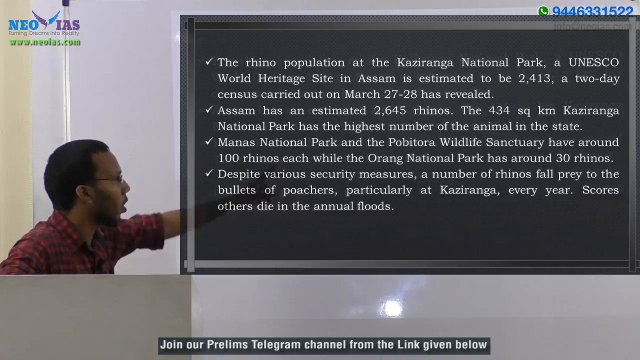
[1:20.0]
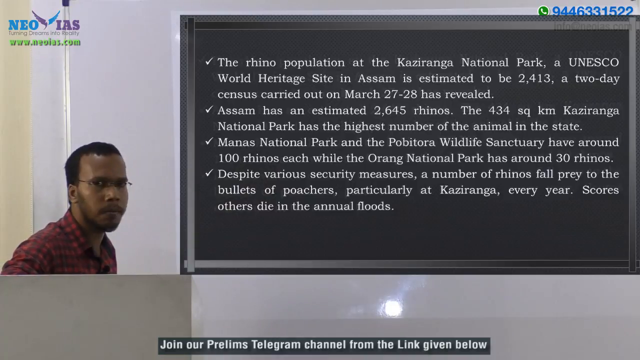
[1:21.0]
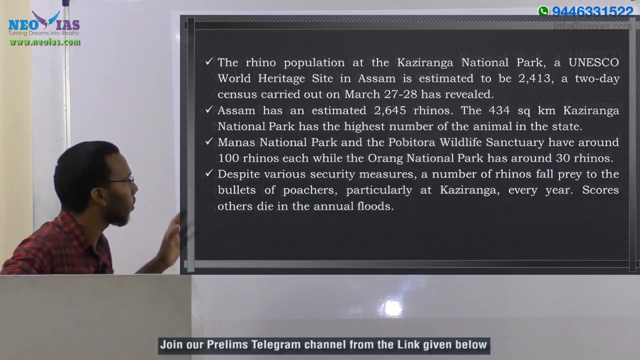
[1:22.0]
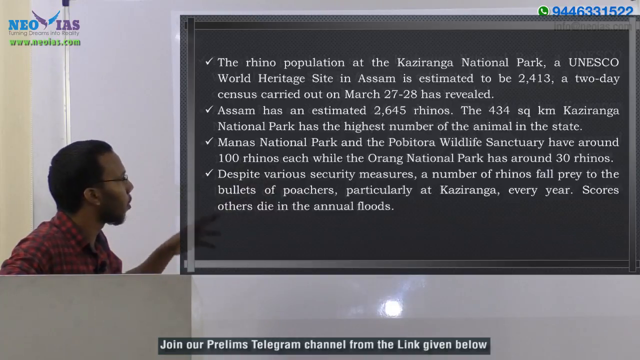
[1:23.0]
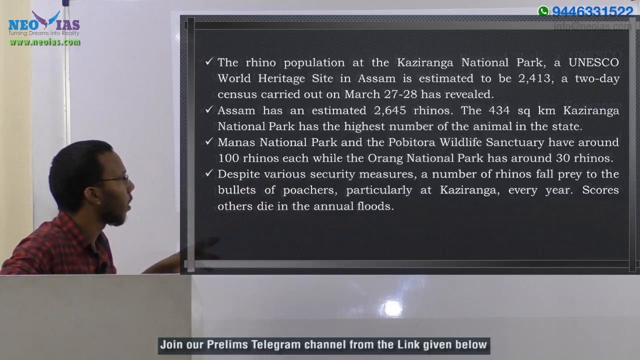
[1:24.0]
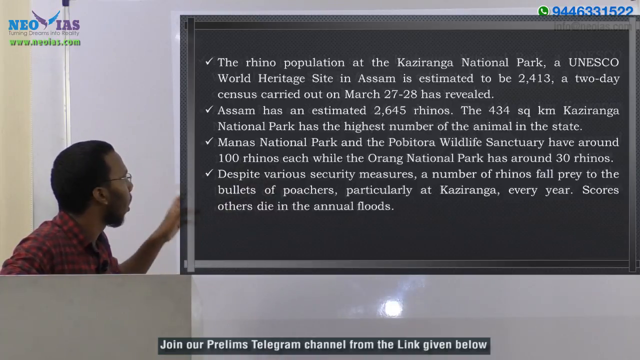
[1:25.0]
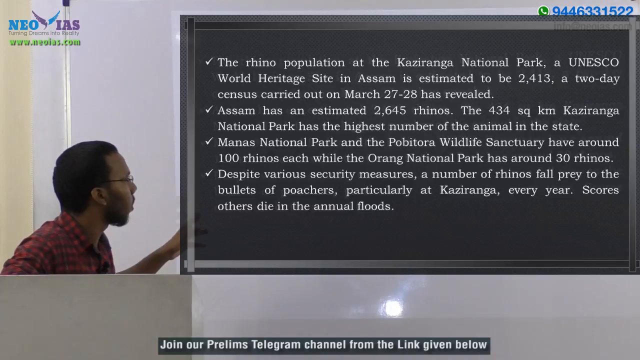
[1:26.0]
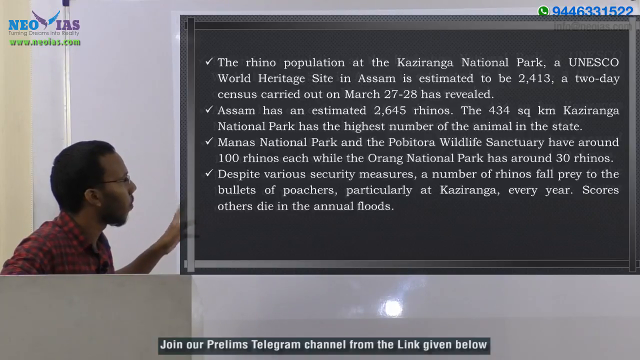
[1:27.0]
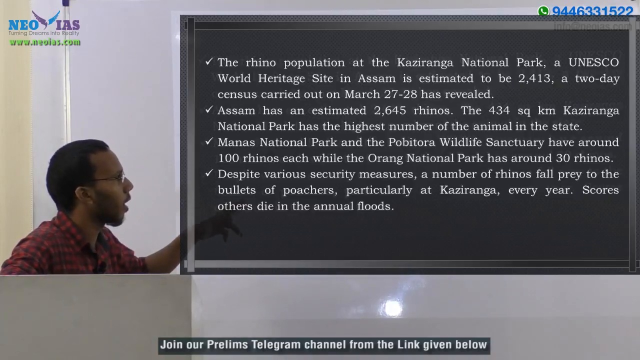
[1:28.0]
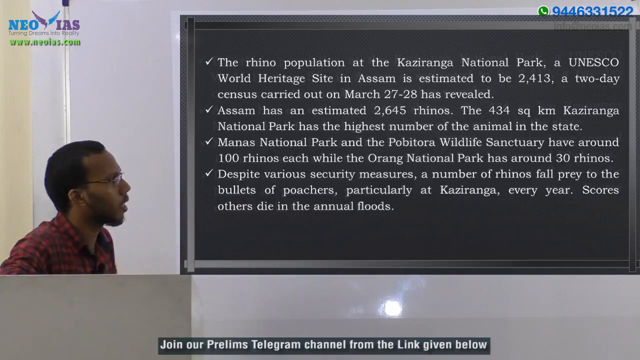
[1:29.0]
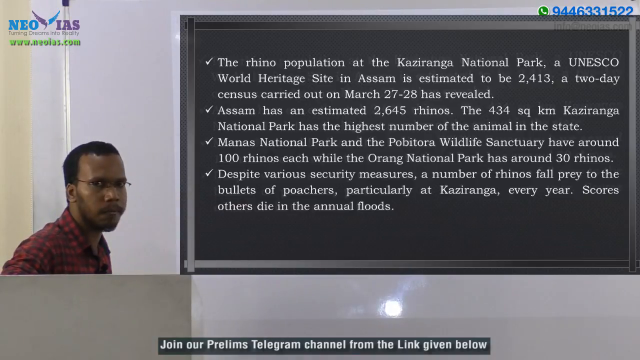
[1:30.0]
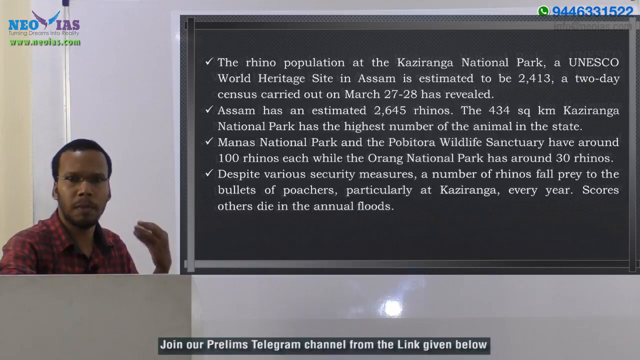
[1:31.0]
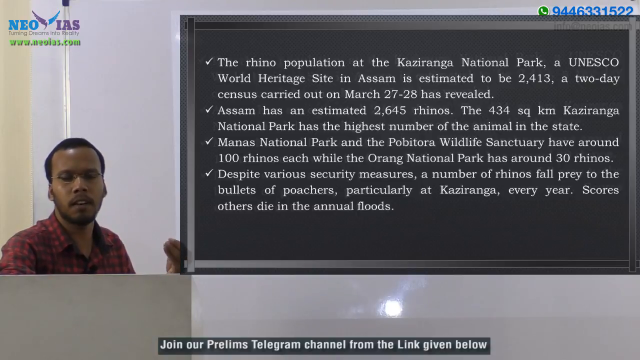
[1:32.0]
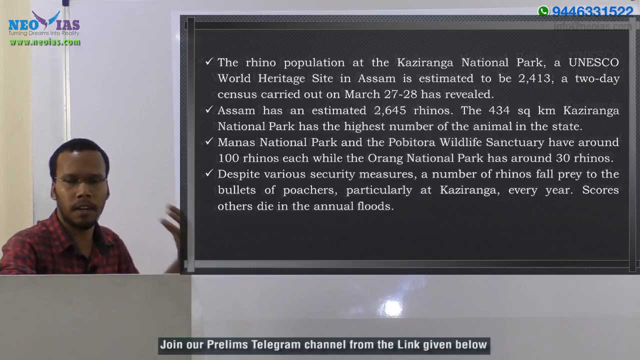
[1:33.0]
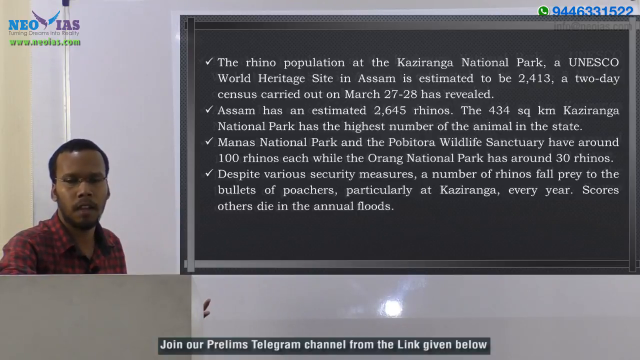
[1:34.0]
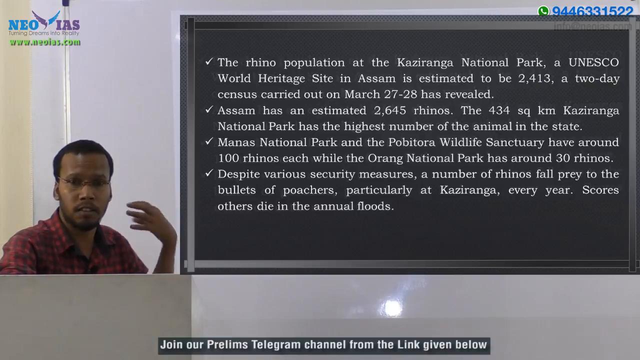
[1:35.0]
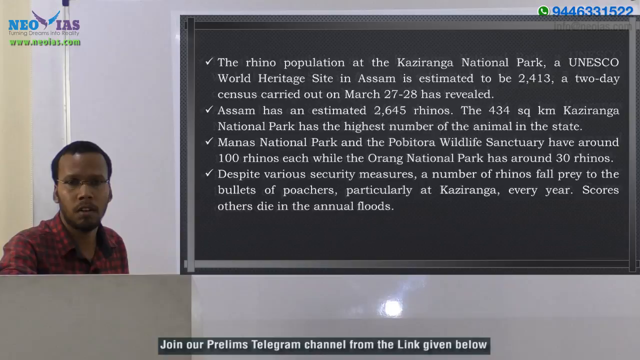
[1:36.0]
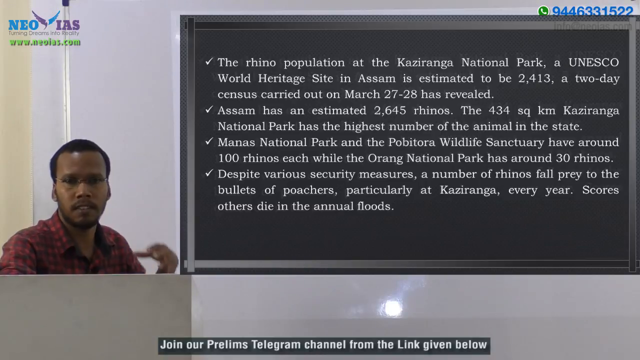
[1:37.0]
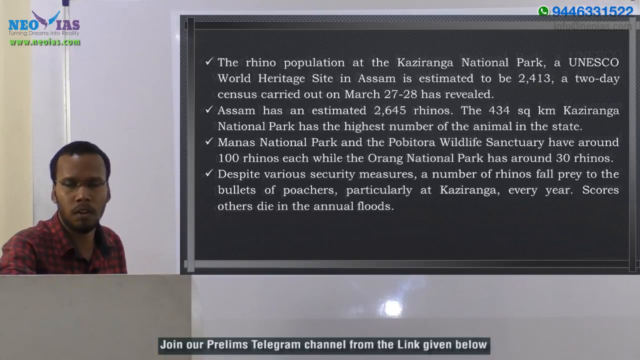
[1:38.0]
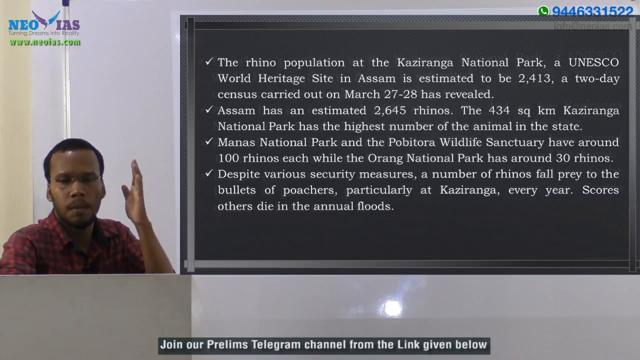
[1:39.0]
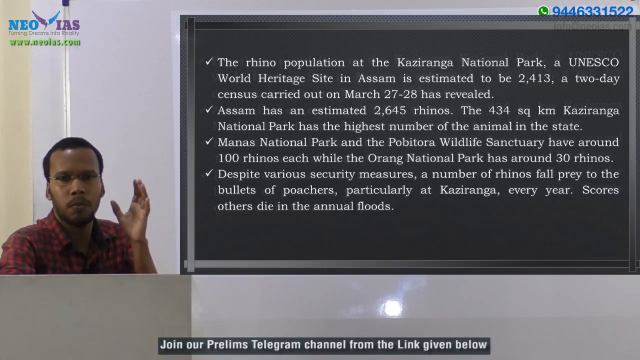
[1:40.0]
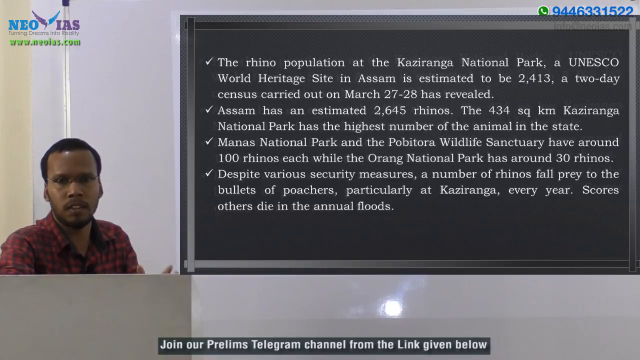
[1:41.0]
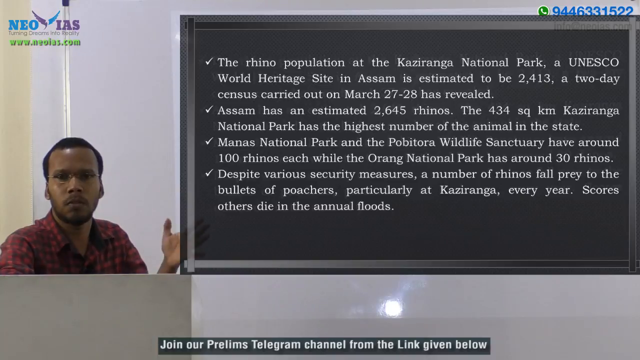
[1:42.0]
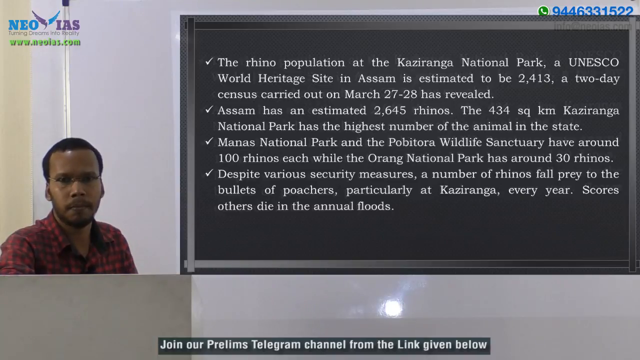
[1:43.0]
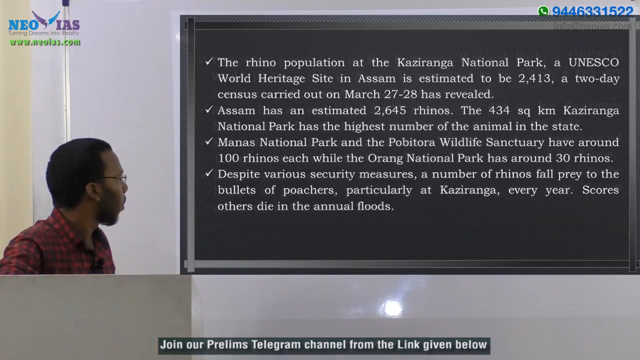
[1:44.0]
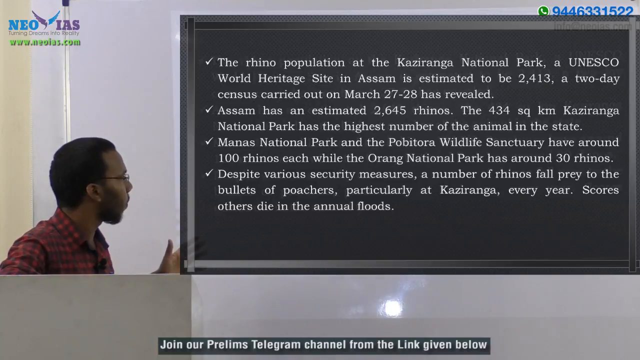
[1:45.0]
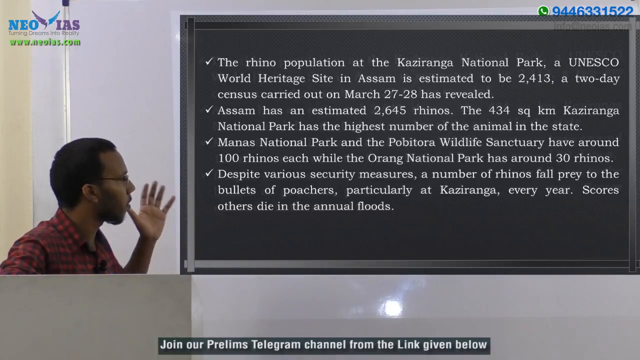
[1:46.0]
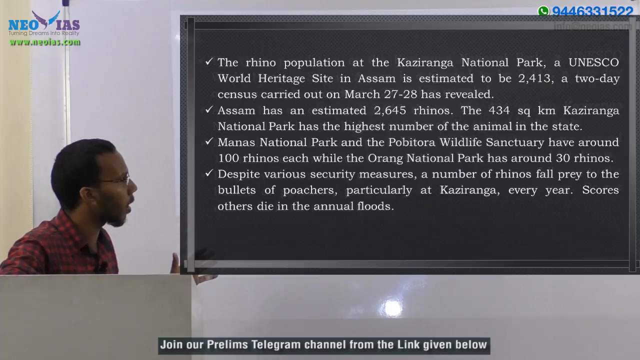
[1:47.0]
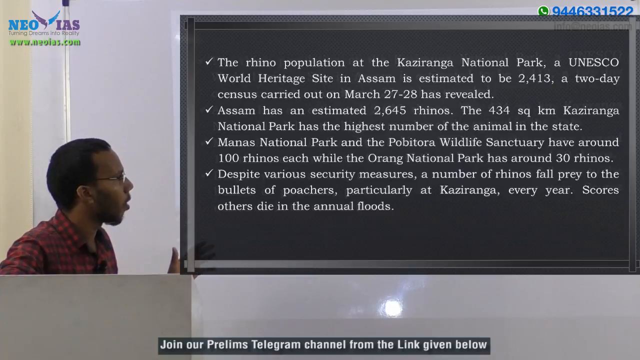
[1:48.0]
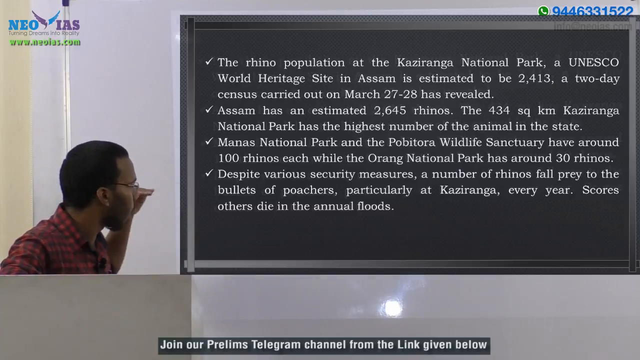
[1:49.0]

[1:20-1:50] A man talks directly to the camera while explaining something on a board on the wall, in what looks like a school or perhaps an office. Now and then he faces the camera, then turns back to the wall to keep reading and explaining. He is a young black man with short curly hair, glasses, and a very trimmed beard and mustache, wearing what looks like a red t-shirt. In front of him is a laptop or a screen, and he is sitting, so nothing else is visible. The information on the wall cannot be seen because it is covered by a black virtual board that covers almost the entire screen. He goes point by point and keeps talking.